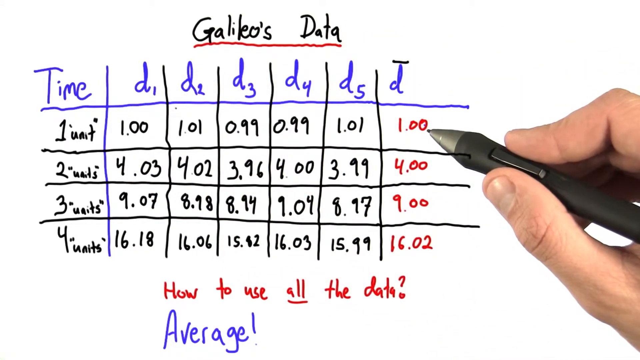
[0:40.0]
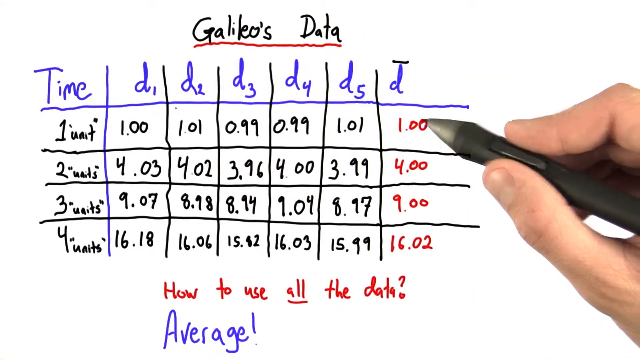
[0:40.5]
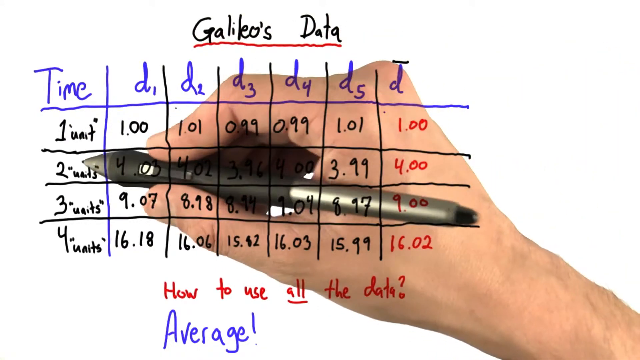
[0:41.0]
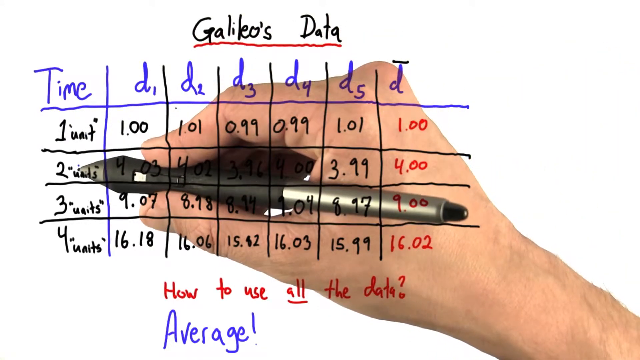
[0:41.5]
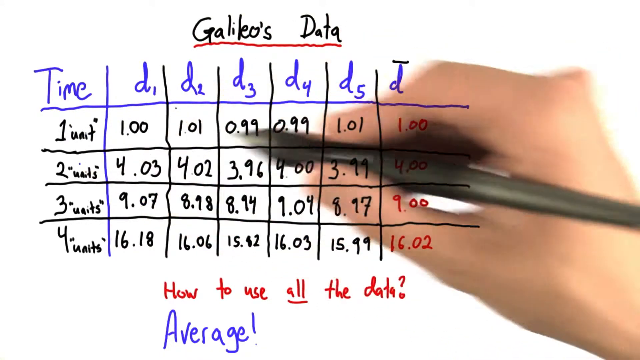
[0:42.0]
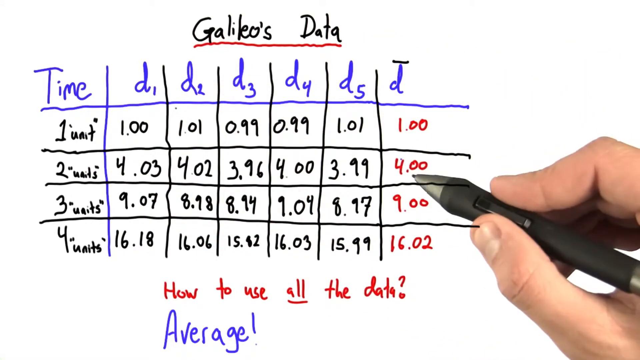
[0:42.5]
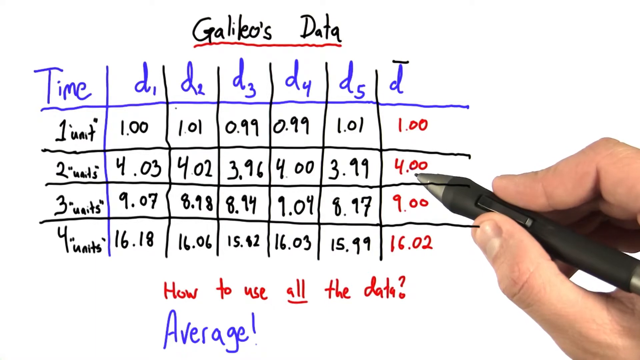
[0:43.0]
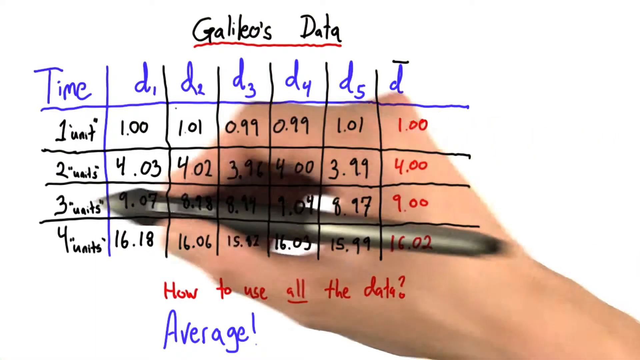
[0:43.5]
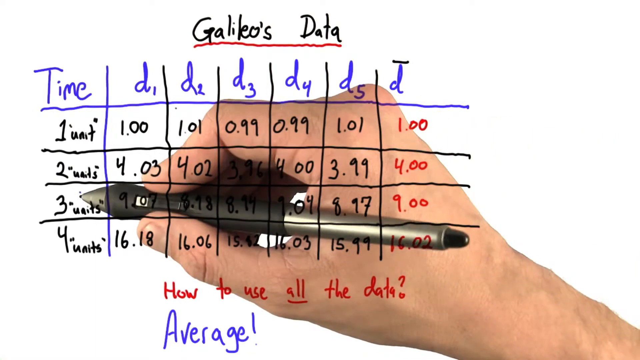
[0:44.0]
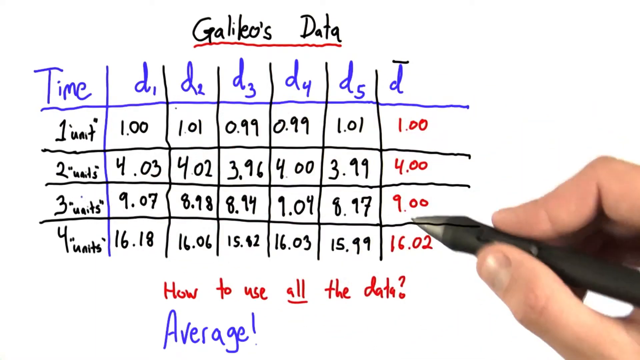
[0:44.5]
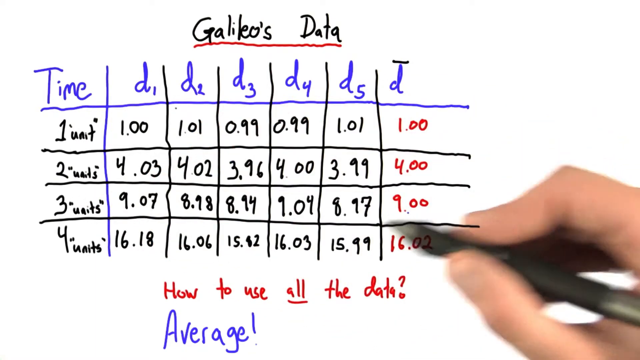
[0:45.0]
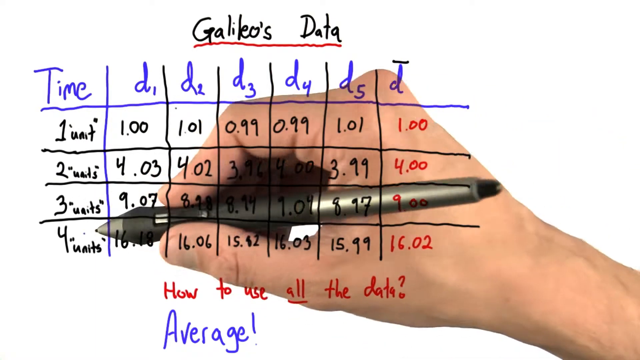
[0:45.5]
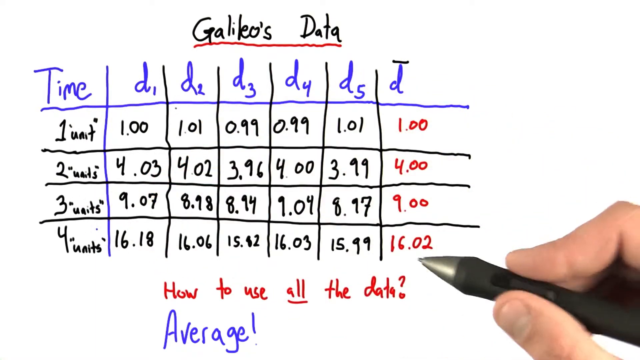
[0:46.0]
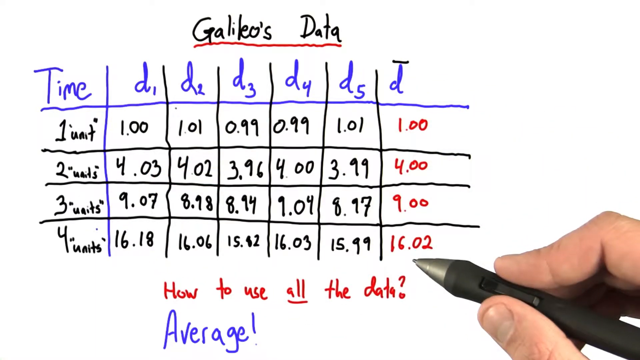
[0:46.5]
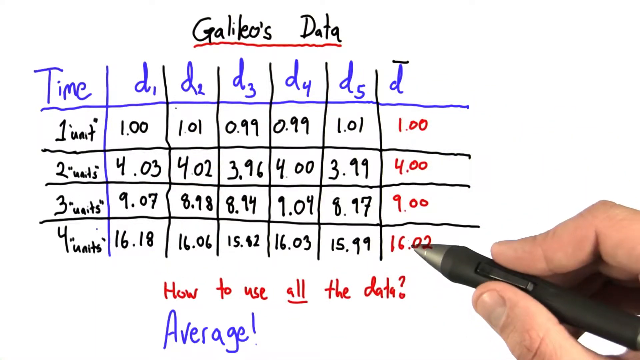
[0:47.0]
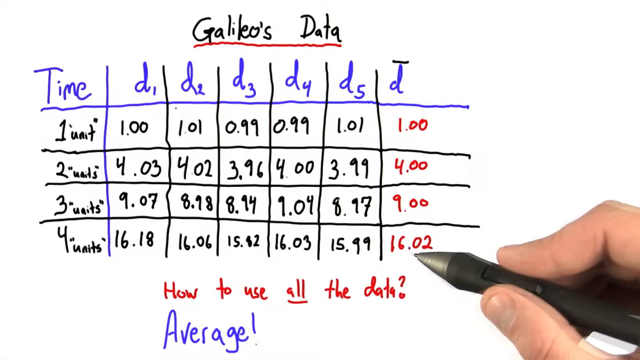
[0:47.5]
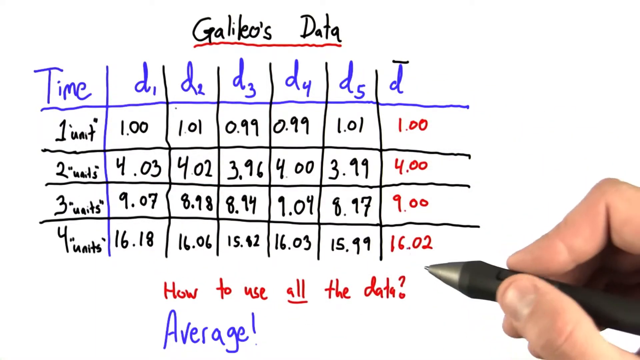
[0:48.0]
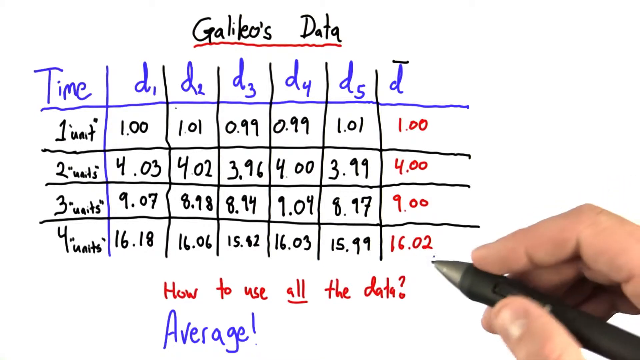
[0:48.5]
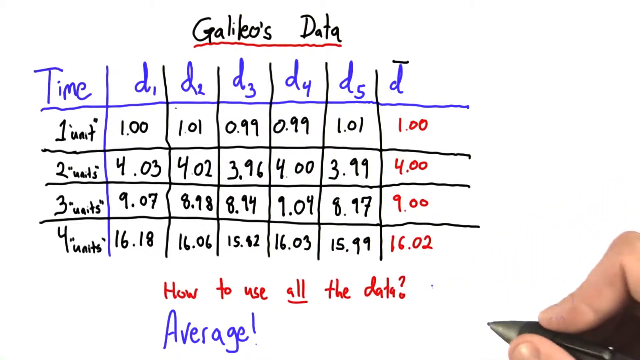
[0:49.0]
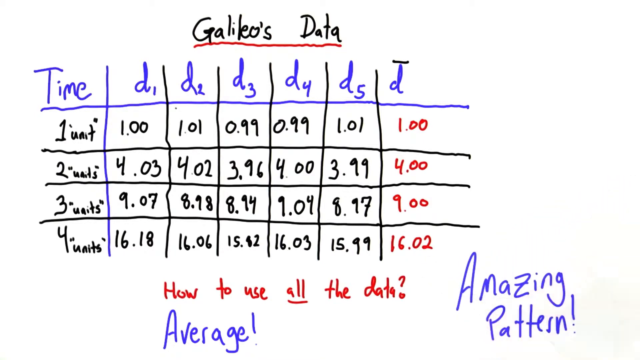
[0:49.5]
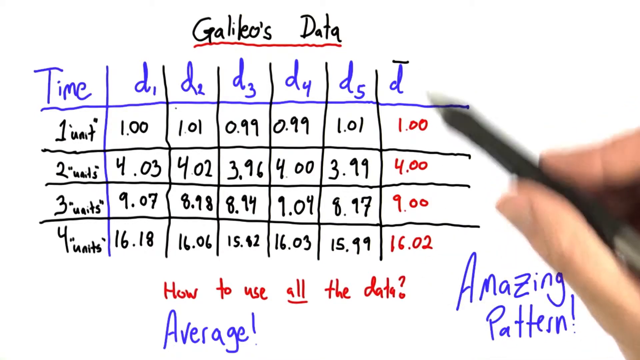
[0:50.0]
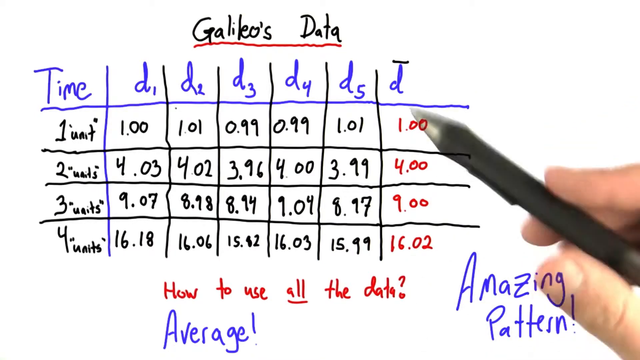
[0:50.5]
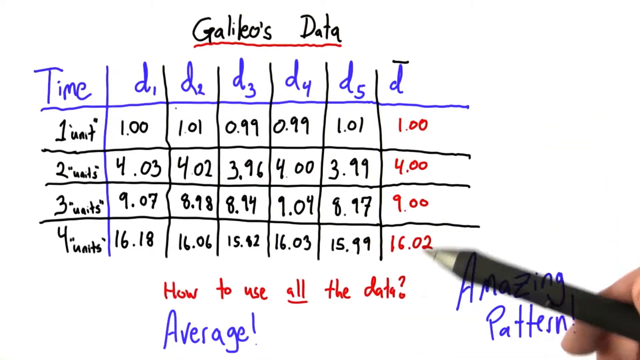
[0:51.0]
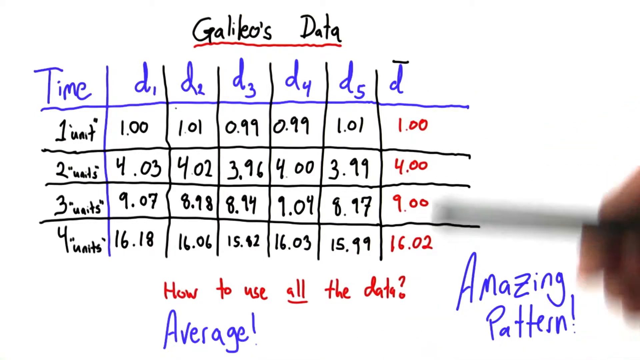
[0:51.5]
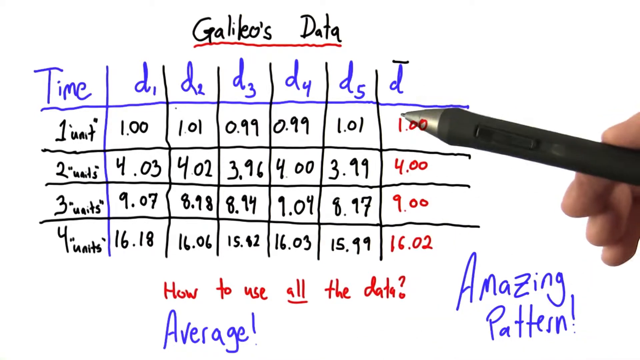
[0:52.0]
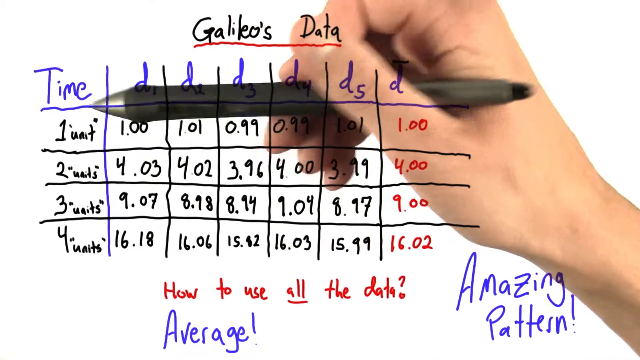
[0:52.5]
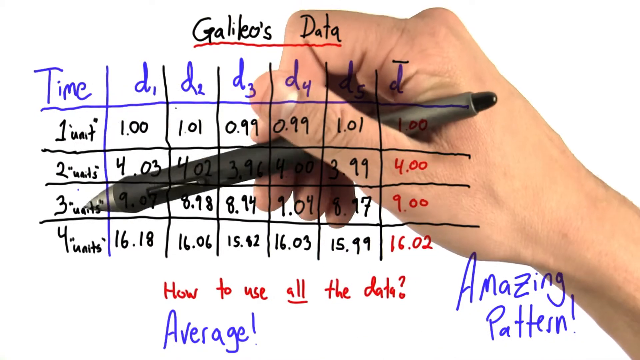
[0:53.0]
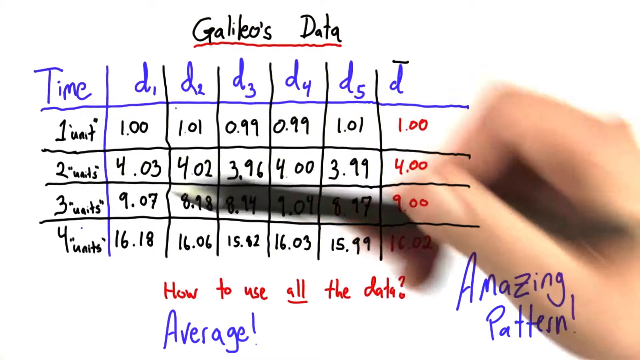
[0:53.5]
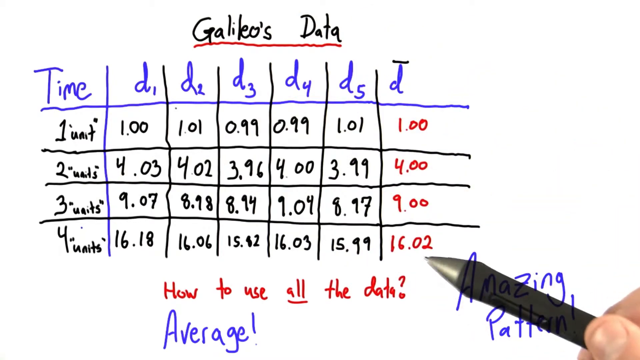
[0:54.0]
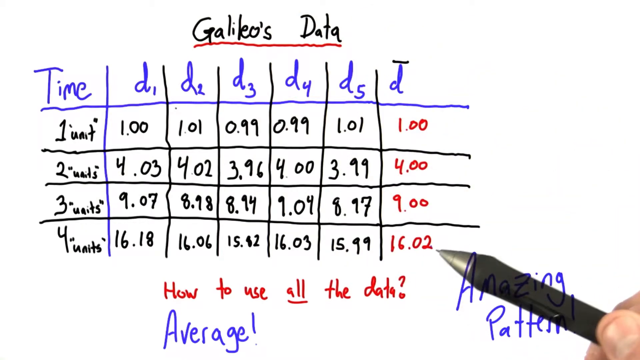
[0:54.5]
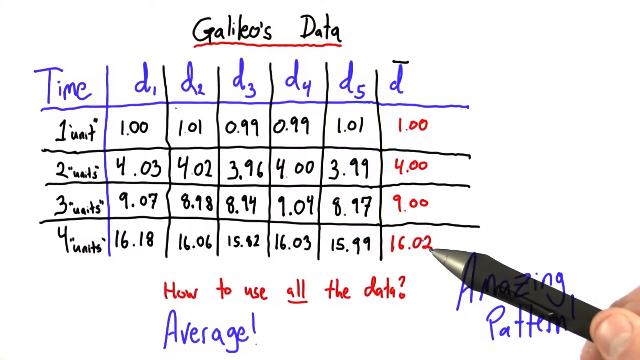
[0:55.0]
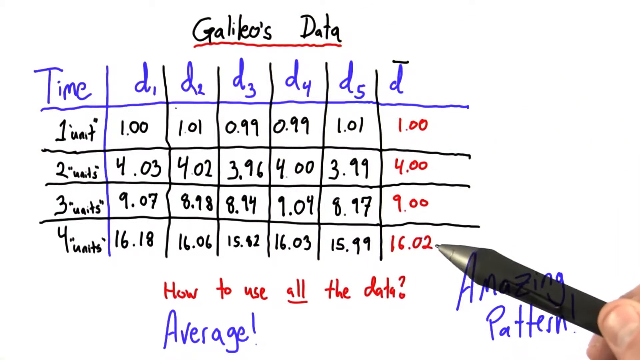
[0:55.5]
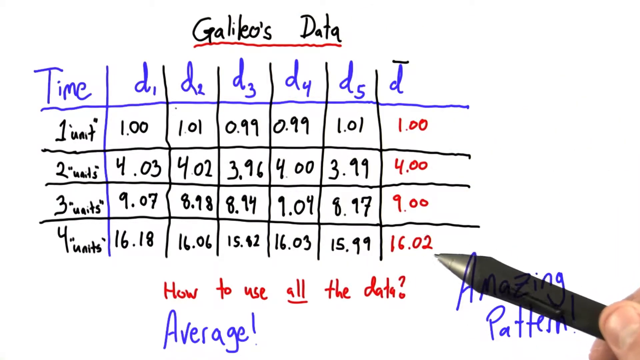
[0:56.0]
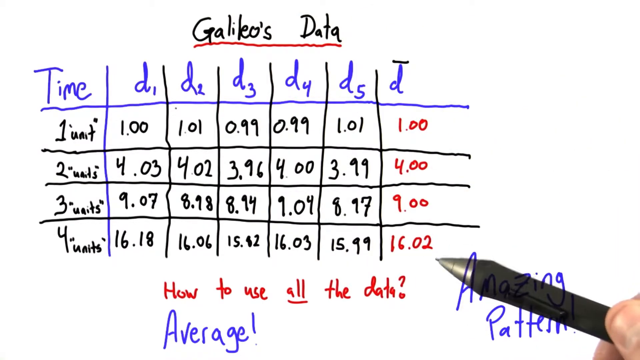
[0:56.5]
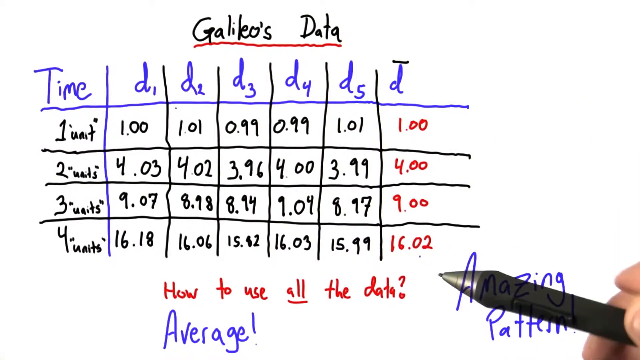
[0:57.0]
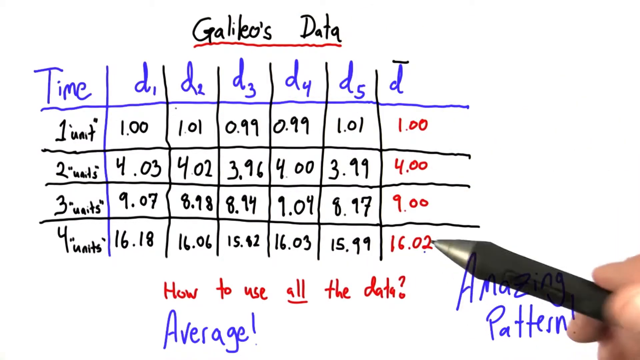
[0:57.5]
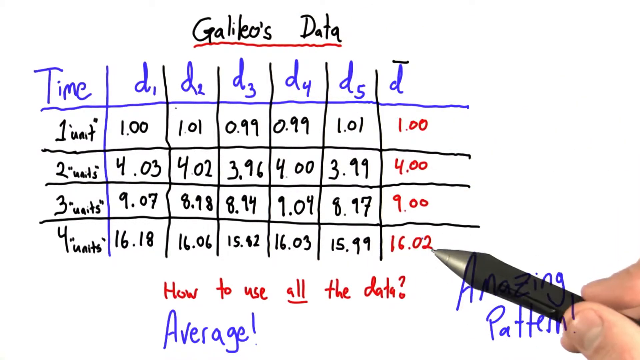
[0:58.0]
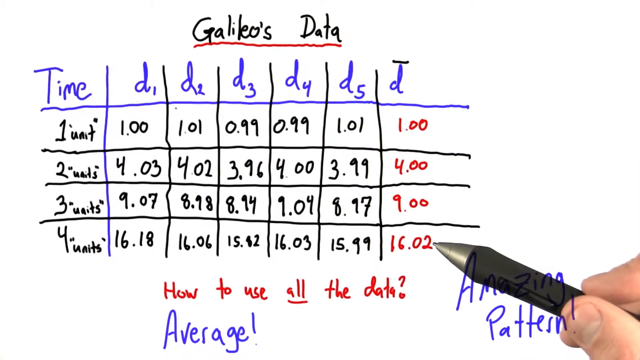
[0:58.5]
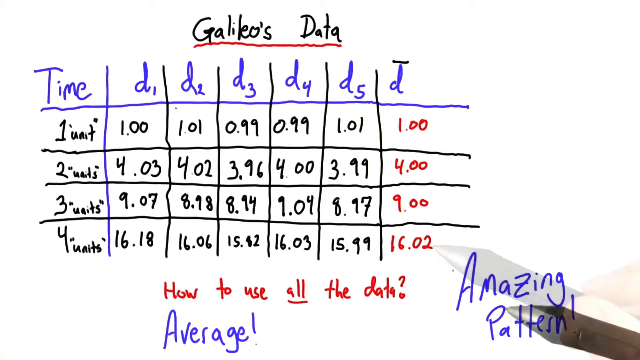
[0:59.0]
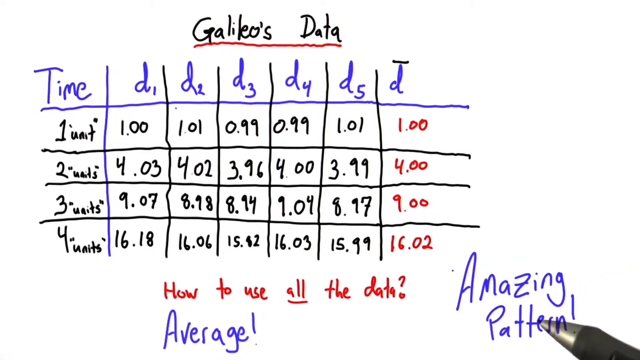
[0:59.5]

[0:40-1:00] The person in the video shows the resulting time for each unit, listing each unit alongside its time. The times follow a pattern: one unit results in 1 second, two units in 4 seconds, three units in a 9-second average, and four units in 16 seconds. Values are given only up to four units.